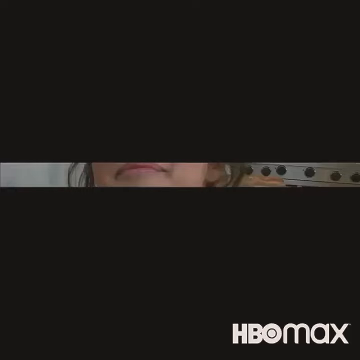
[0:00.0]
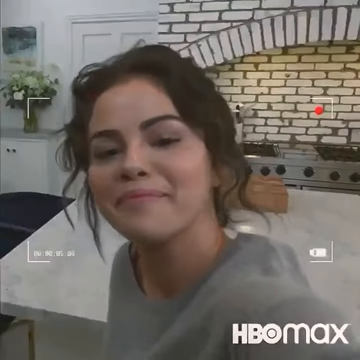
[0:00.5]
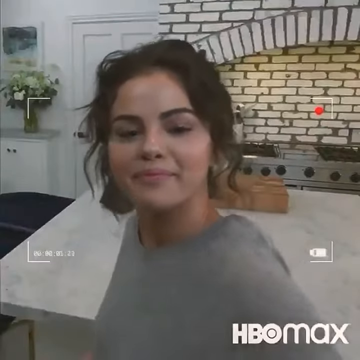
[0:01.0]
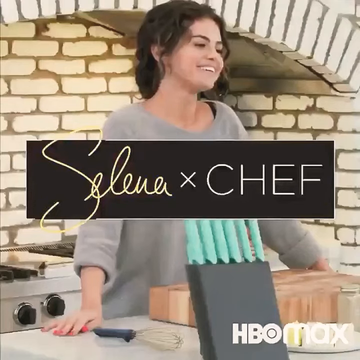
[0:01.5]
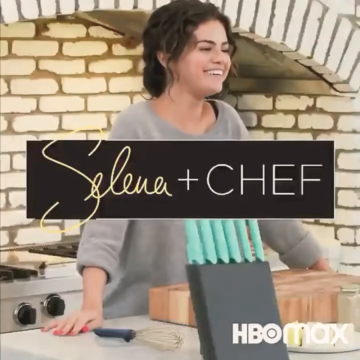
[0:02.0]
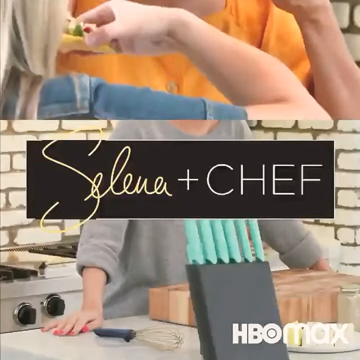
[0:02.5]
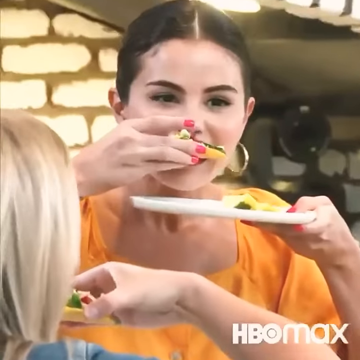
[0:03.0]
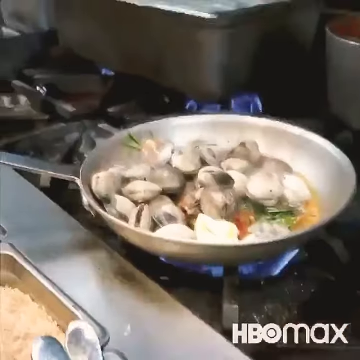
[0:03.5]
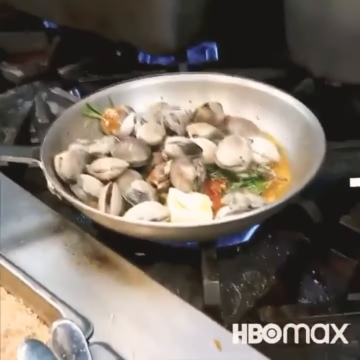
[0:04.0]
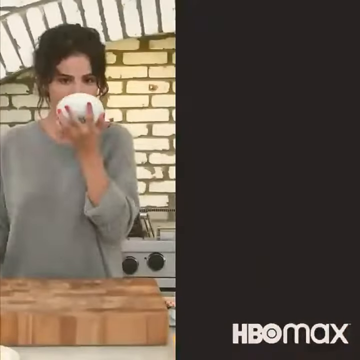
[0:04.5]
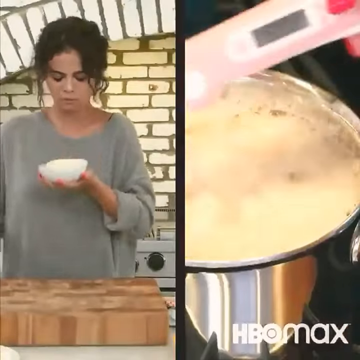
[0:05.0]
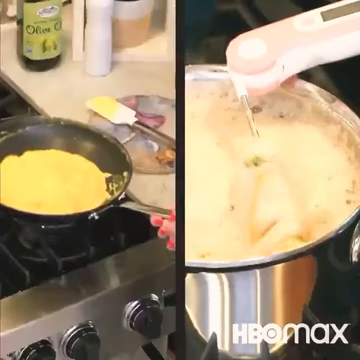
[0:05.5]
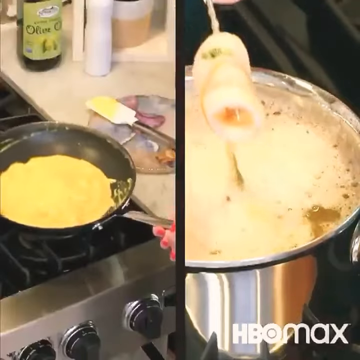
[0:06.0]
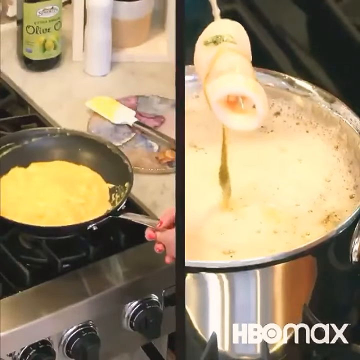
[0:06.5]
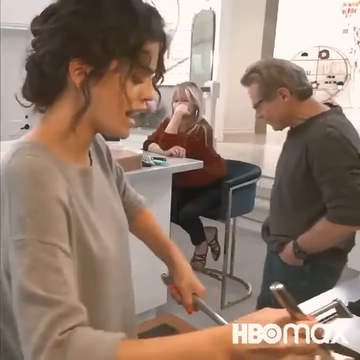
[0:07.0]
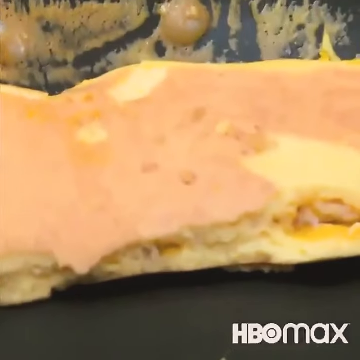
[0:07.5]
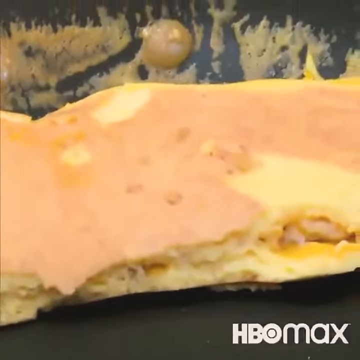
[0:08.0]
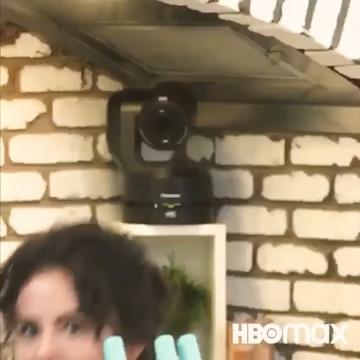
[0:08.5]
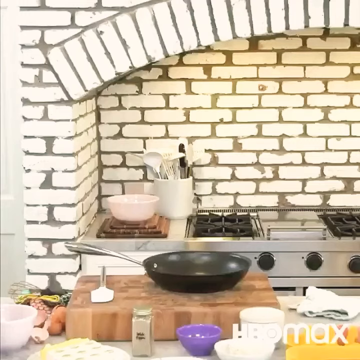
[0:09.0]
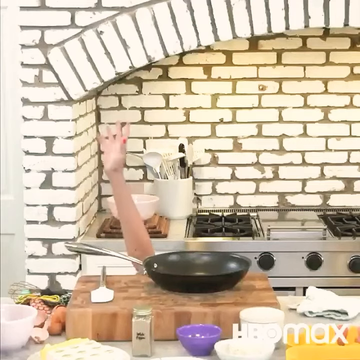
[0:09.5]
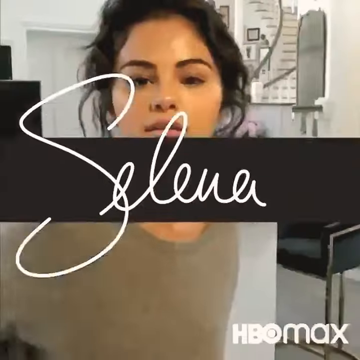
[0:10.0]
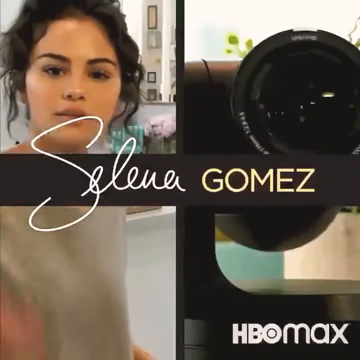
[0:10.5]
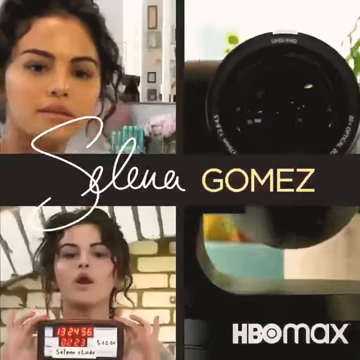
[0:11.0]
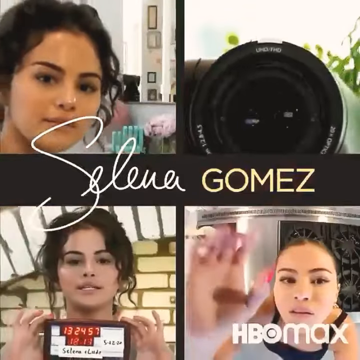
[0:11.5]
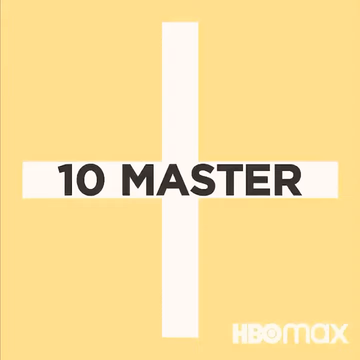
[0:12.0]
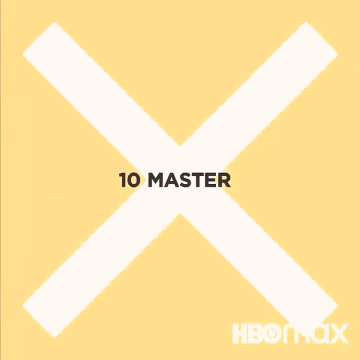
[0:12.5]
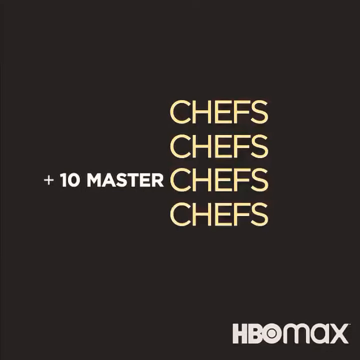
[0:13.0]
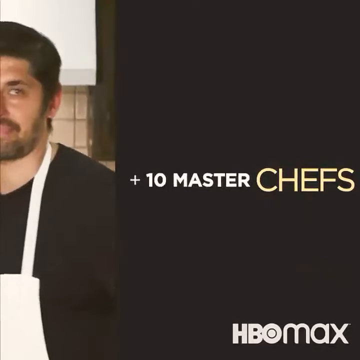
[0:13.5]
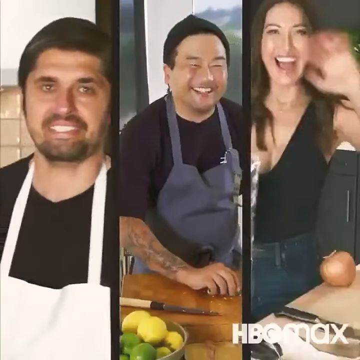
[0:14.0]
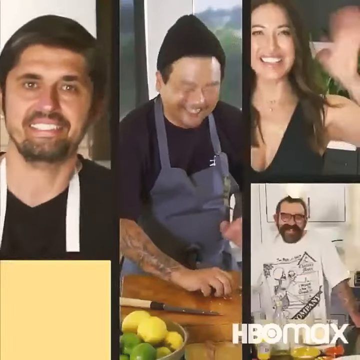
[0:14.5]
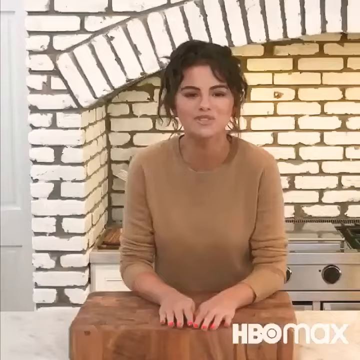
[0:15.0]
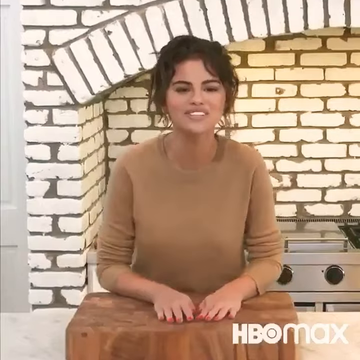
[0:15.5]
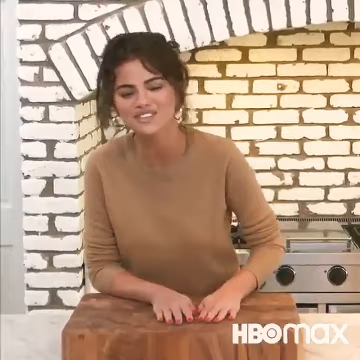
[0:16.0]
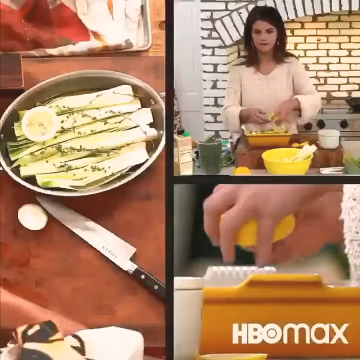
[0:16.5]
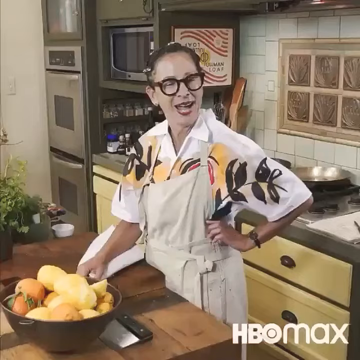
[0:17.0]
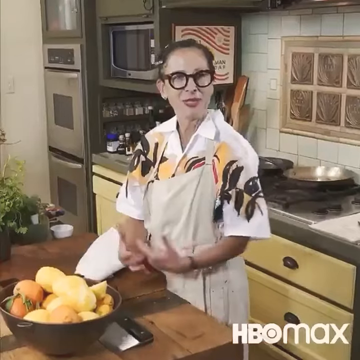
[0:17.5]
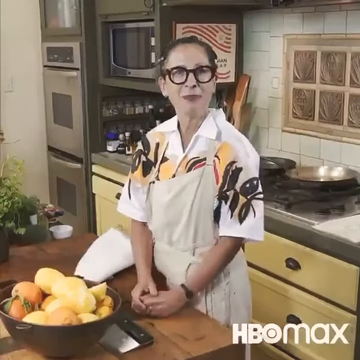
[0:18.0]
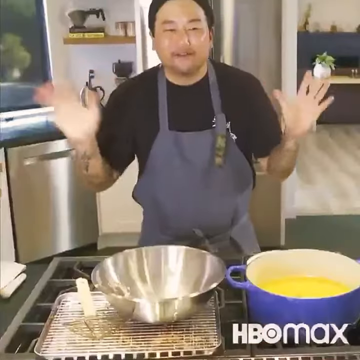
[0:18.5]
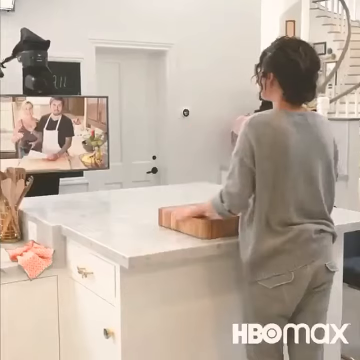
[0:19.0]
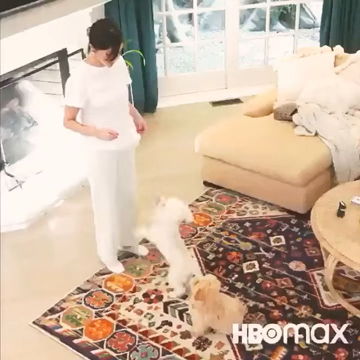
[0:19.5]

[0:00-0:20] An HBO Max ad features a woman named Selena in a show that seems to be called Selena Gomes and Chefs. People try out various types of food. She wears a gray shirt, and right after, other people who seem to be participants of the show try the food; it seems to be a show where people eat what she makes. She makes a type of food that looks like an egg, in a pan with an egg. Several people appear together, and she makes a funny face. The setting is a kitchen. The ad then shows that 10 Master Chefs participate in the show together with her; they appear doing various things as they pass across the screen.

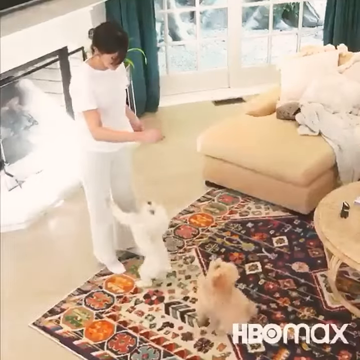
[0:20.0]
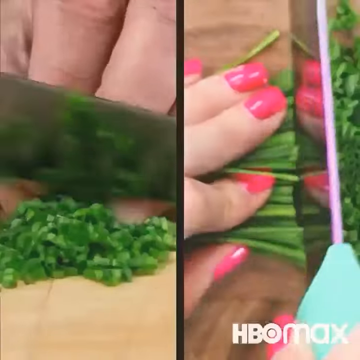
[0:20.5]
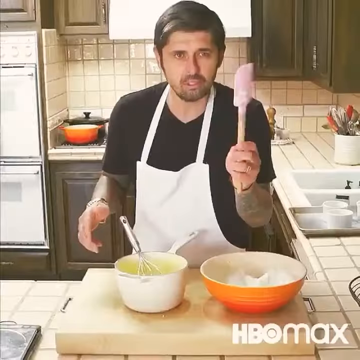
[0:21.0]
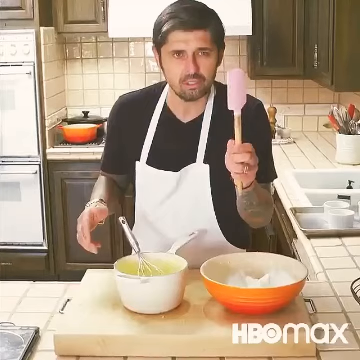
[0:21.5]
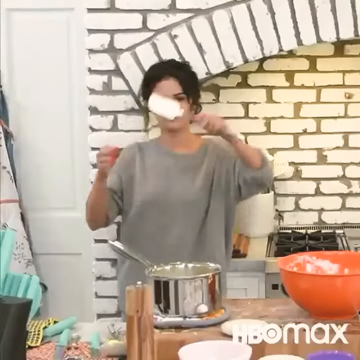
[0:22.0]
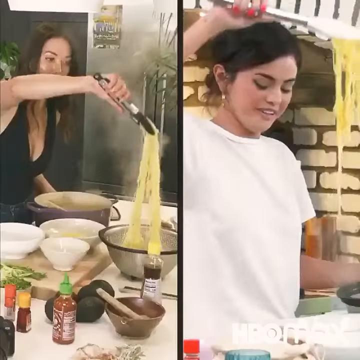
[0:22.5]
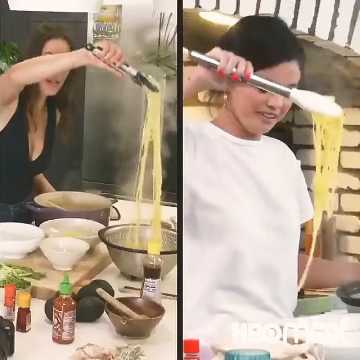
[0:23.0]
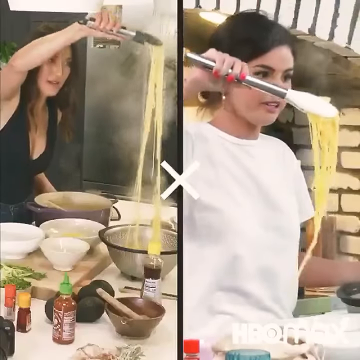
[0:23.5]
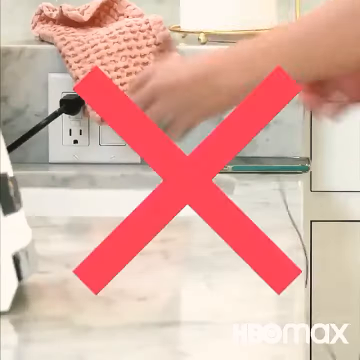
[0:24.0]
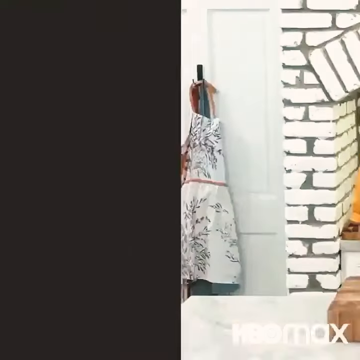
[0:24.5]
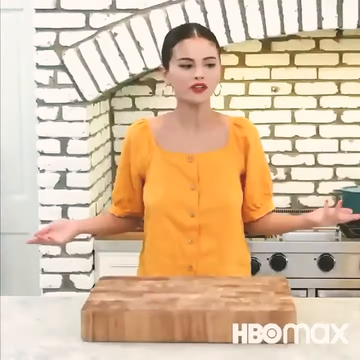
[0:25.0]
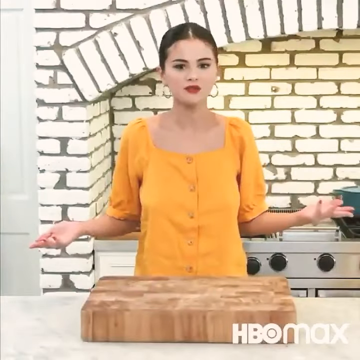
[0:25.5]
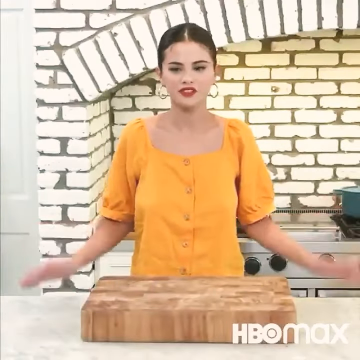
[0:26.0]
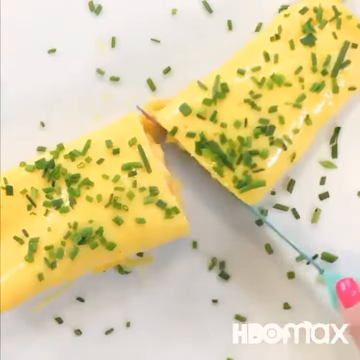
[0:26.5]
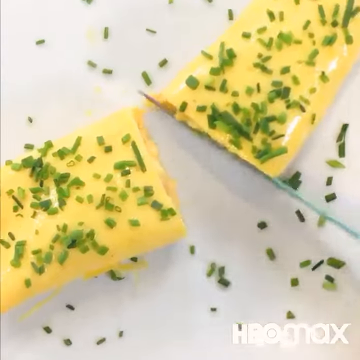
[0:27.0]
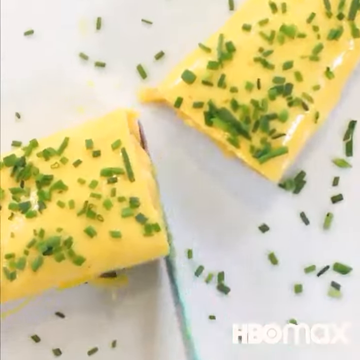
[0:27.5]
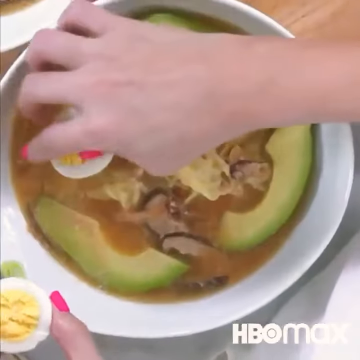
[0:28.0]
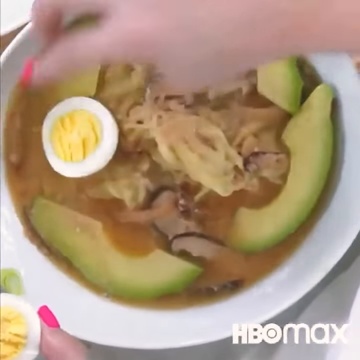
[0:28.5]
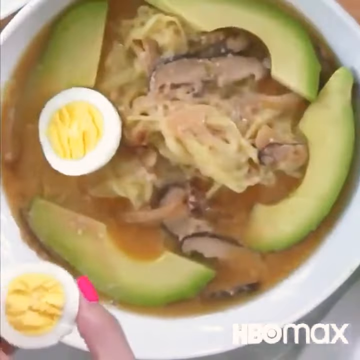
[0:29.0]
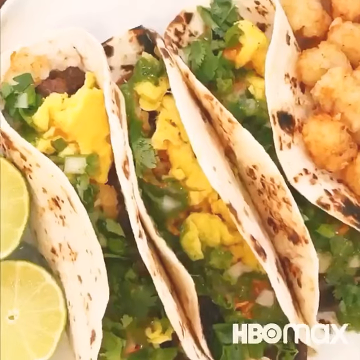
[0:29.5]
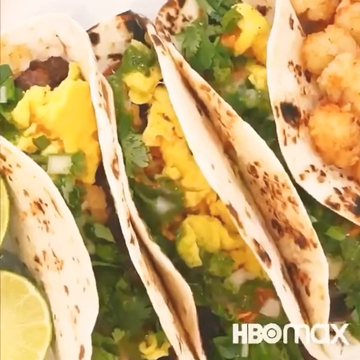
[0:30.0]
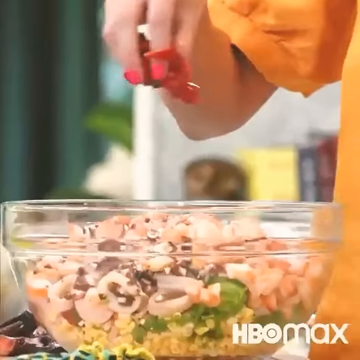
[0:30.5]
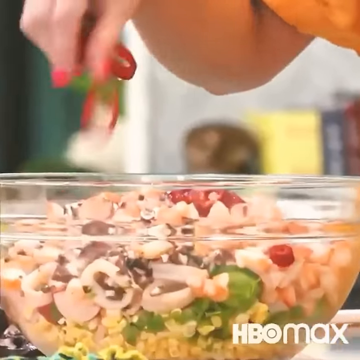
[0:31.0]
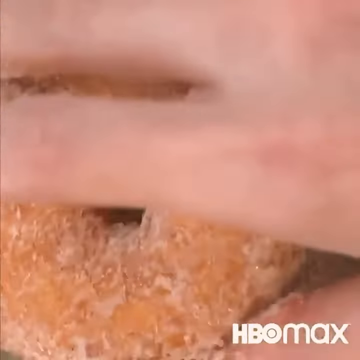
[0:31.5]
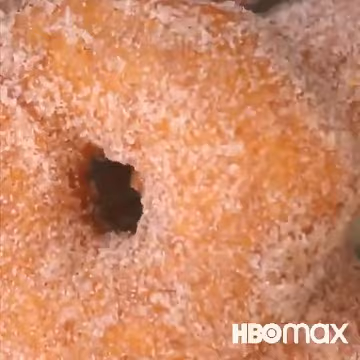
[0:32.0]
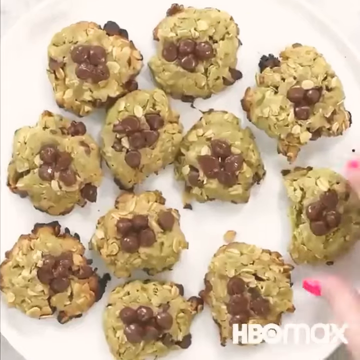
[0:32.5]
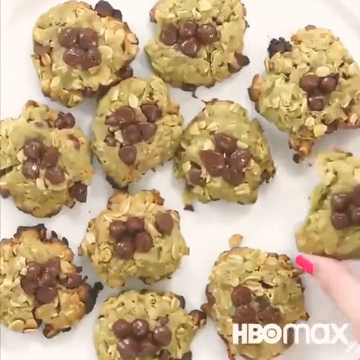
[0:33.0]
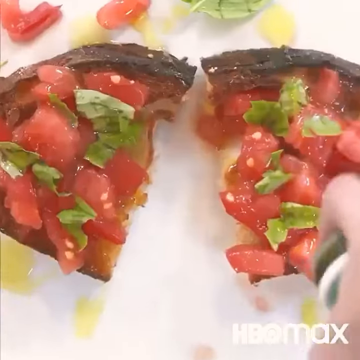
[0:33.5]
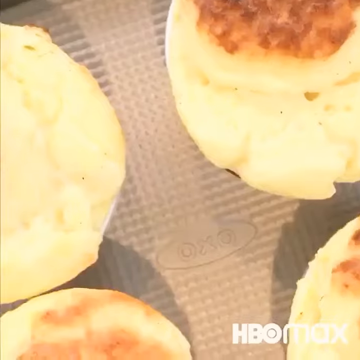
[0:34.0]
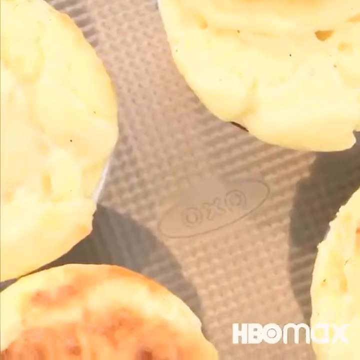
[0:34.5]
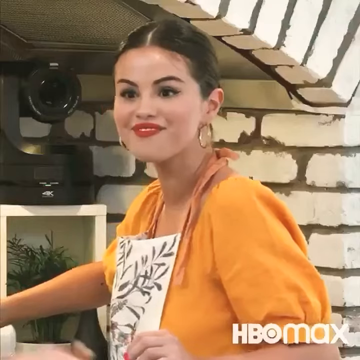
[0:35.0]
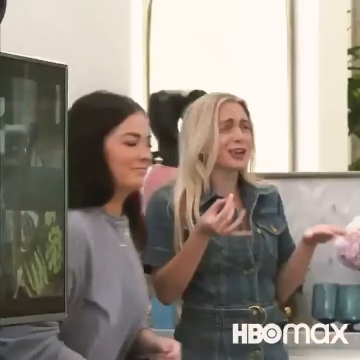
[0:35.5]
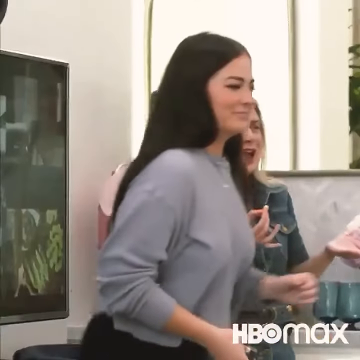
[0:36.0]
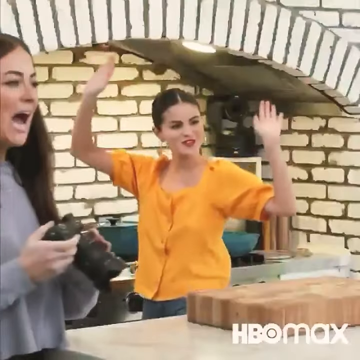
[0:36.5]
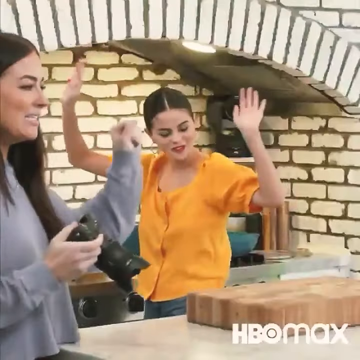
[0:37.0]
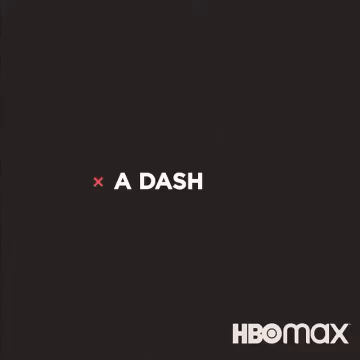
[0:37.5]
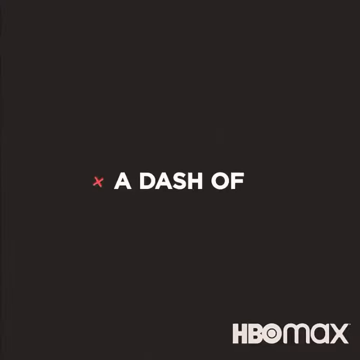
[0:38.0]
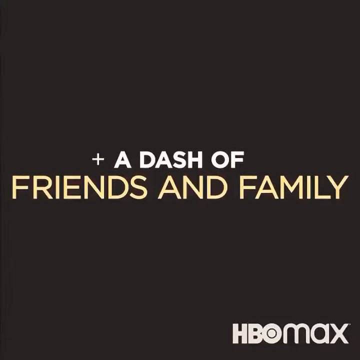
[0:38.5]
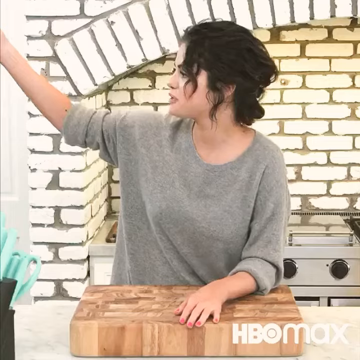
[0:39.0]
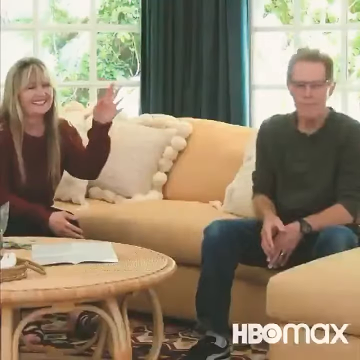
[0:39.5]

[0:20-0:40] Several scenes show the participants of the program, the 10 master chefs who take part alongside Selena, the presenter. She uses spoons and spatulas, and several pots full of different types of food keep appearing. In one scene two women appear, one on each side of the image: the one on the right is dressed in white and the one on the left in black, holding very large noodles with a noodle picker. Several white bowls with various condiments surround the main pot. She is explaining and gesturing. A person stirs the dish, decorating it, and puts an egg in the middle. Several participants are shown competing; it appears that family members compete with each other.